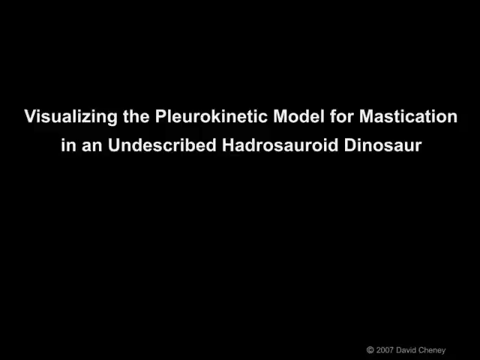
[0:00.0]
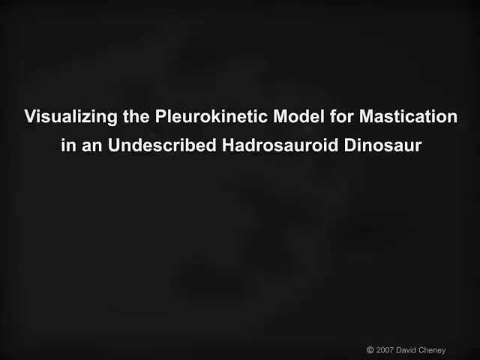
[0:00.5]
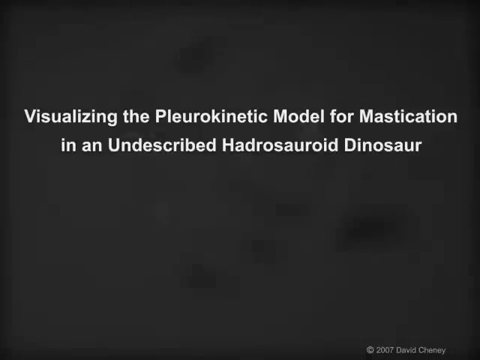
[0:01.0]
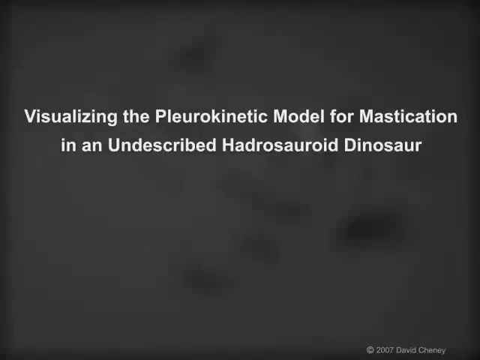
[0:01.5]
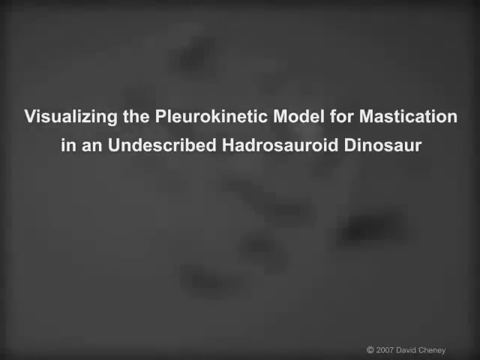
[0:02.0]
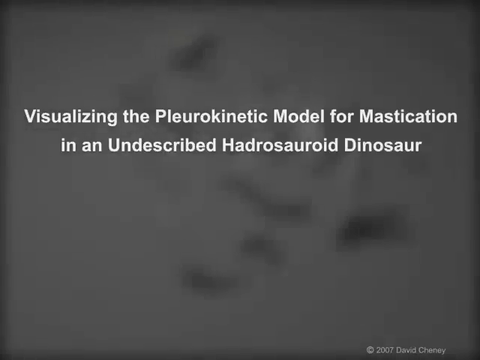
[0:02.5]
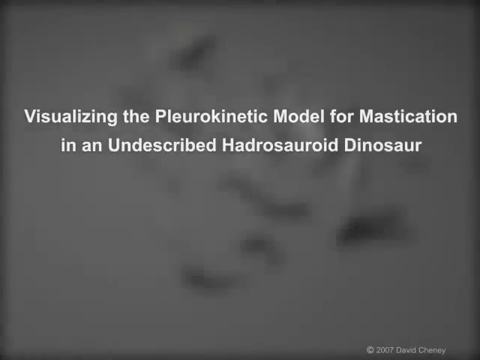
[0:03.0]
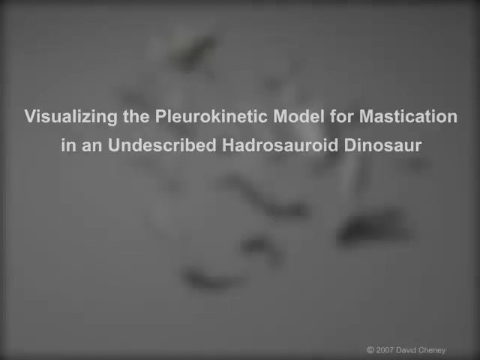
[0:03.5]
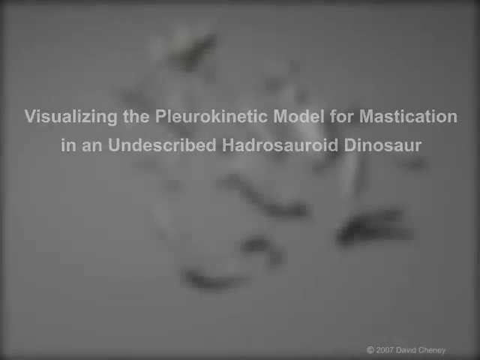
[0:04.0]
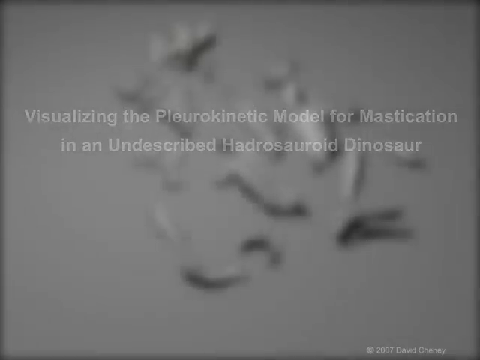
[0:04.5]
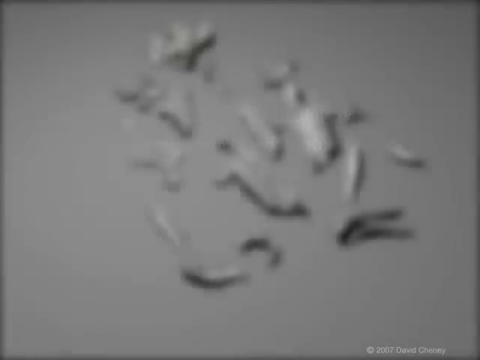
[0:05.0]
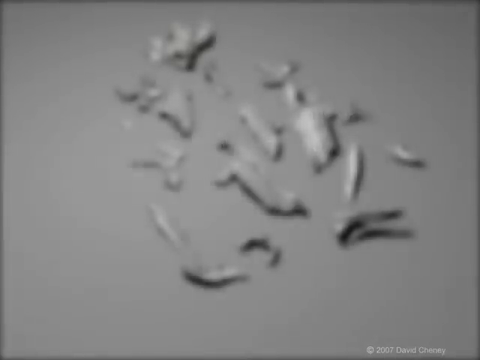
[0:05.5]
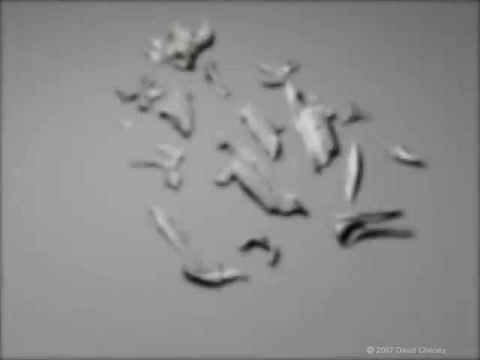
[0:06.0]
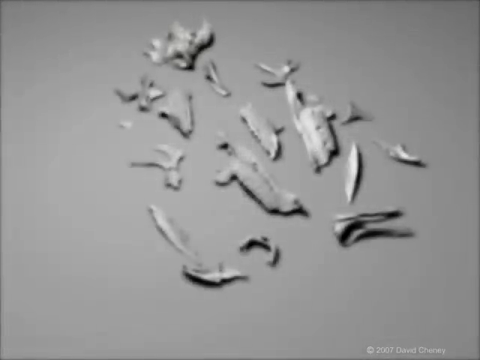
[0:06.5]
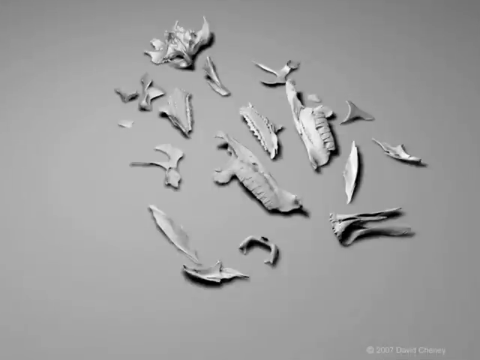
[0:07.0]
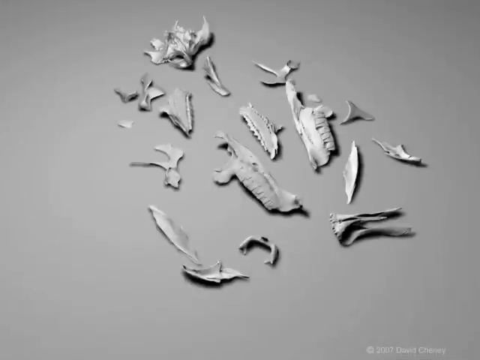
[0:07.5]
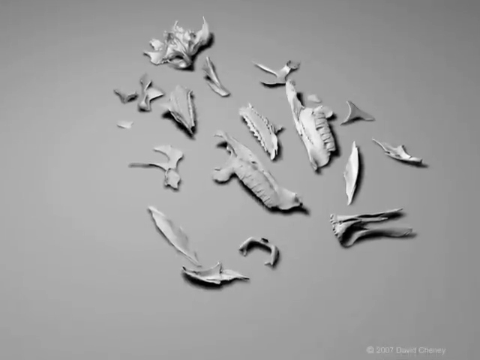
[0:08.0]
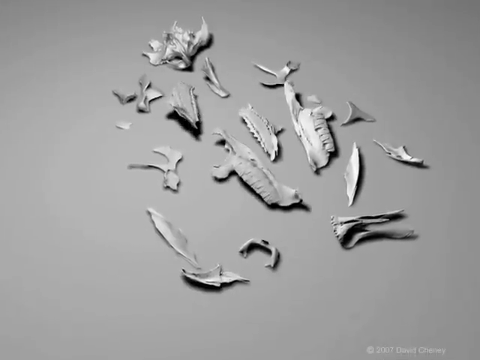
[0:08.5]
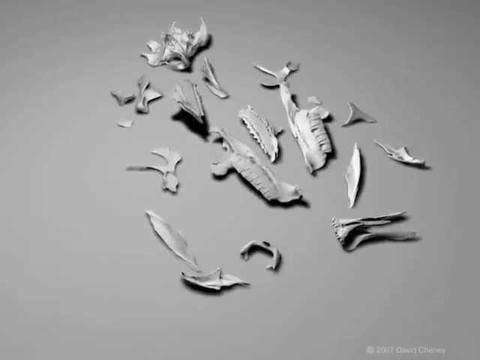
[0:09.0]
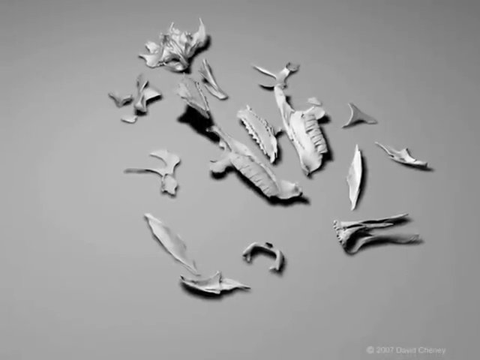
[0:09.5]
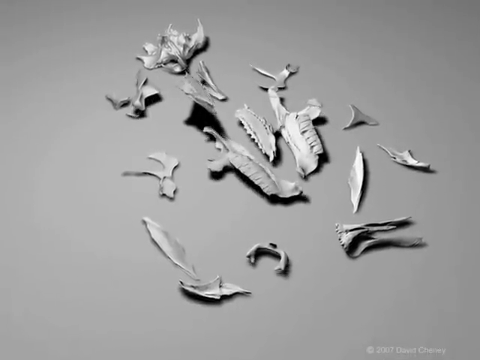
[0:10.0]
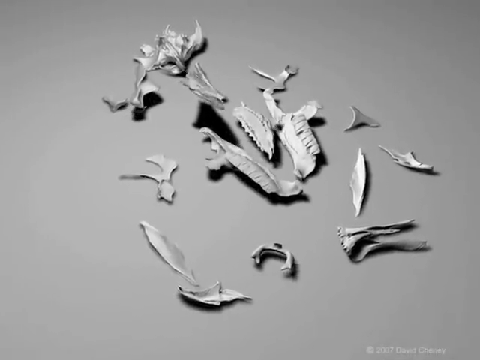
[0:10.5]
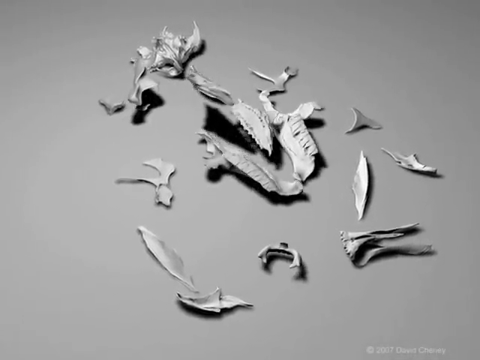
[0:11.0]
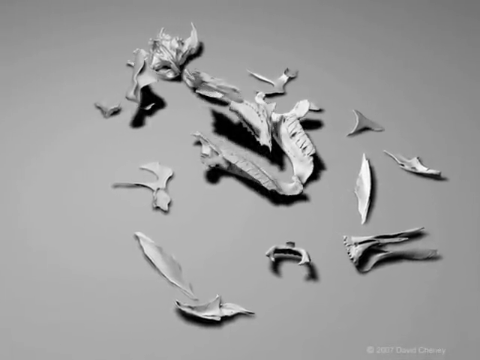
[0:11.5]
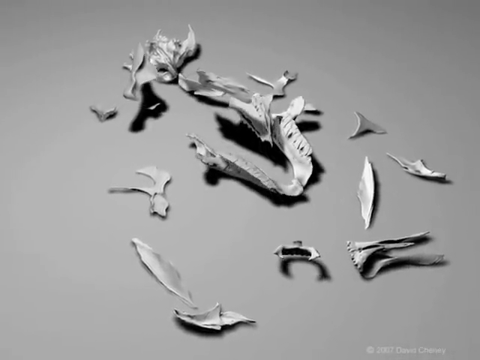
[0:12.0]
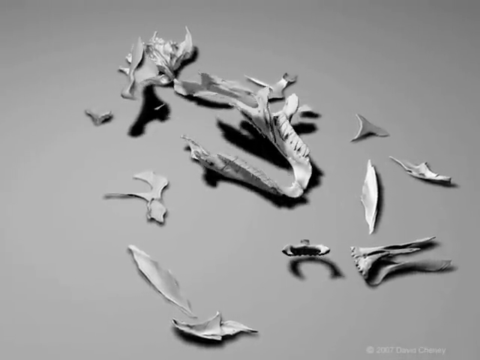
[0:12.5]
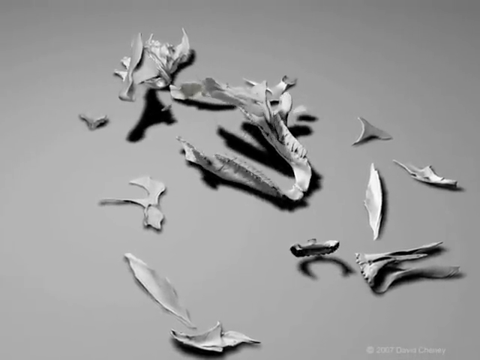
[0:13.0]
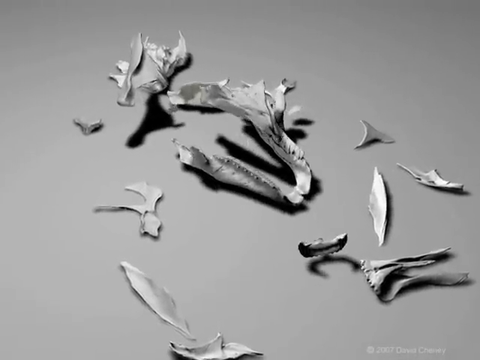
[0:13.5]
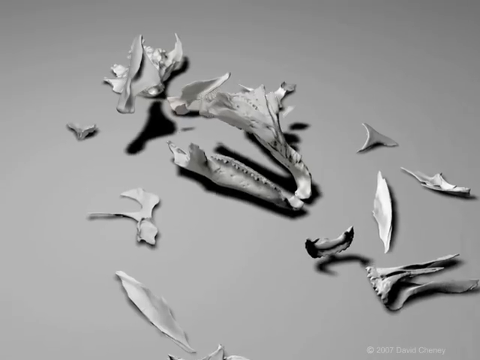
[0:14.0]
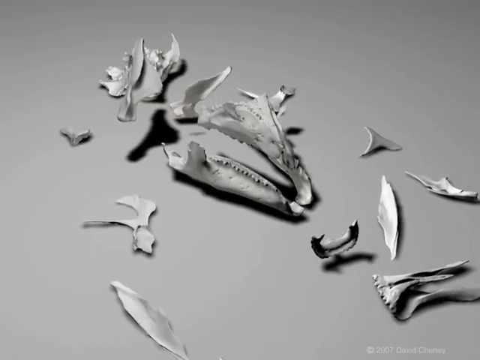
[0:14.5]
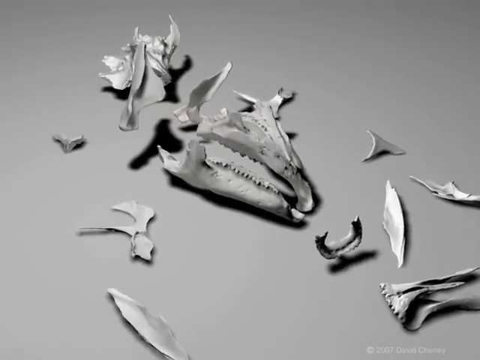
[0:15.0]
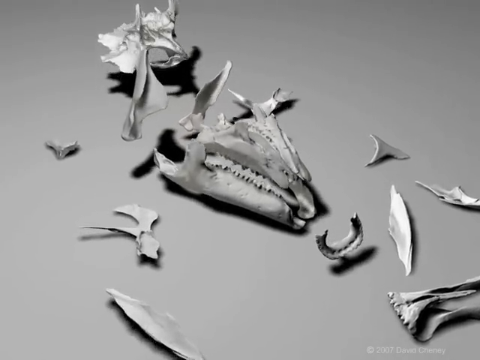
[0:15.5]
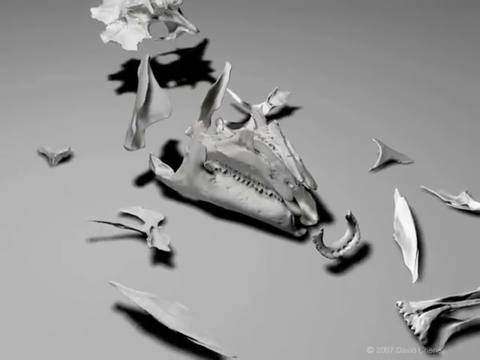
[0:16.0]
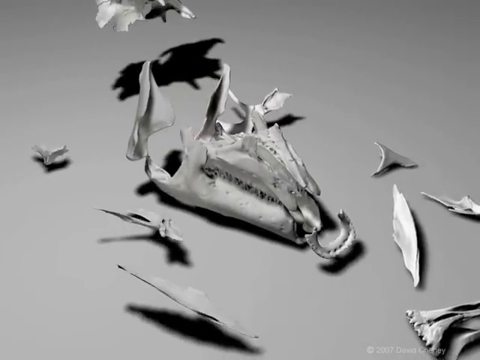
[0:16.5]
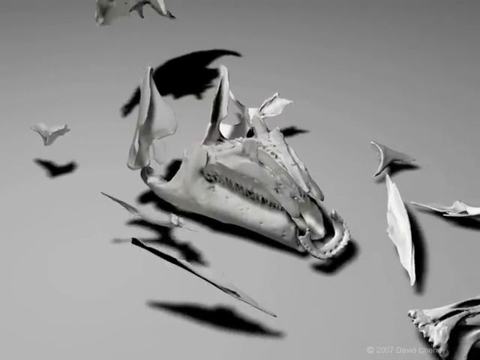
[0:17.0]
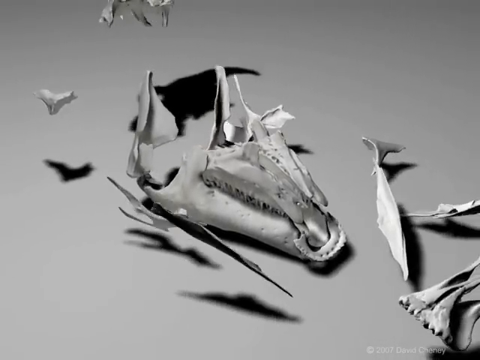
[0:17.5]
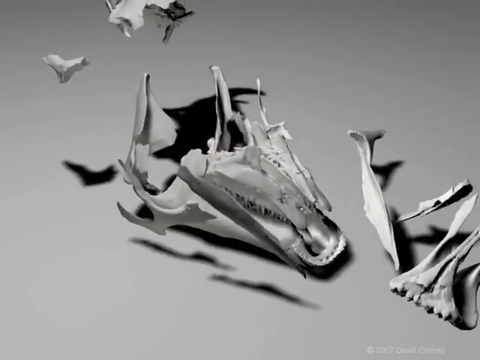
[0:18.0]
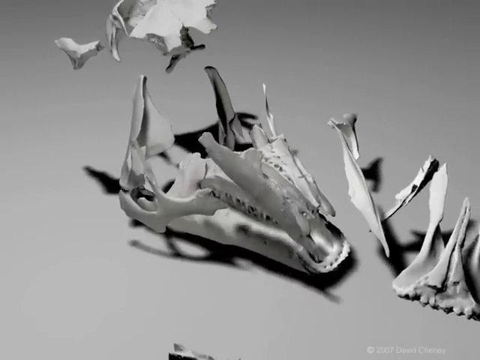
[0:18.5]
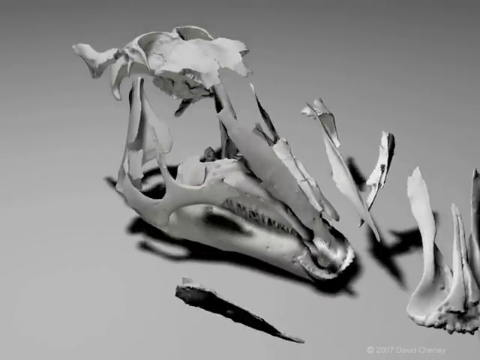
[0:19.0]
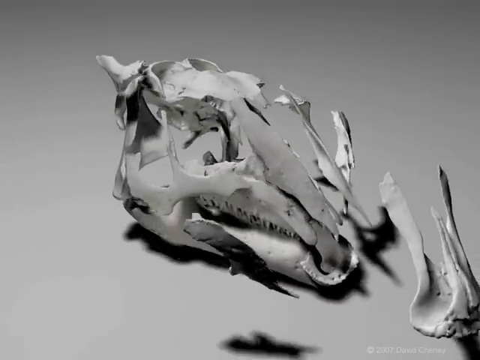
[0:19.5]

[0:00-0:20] On a black background, white text reads "Visualizing the pleurokinetic model for mastication," and the next line reads "in an undescribed hadrosauroid dinosaur." In the bottom right corner there is a copyright symbol followed by "David" and a last word that begins with a C and ends with a Y. A number of white fragments, probably bones, then appear and begin forming a dinosaur head; while the fragments are shown, the background lightens from black to a shade of gray. The dinosaur's mouth is kind of long rather than wide. The top part of the skull is not yet finished when the screen goes black.